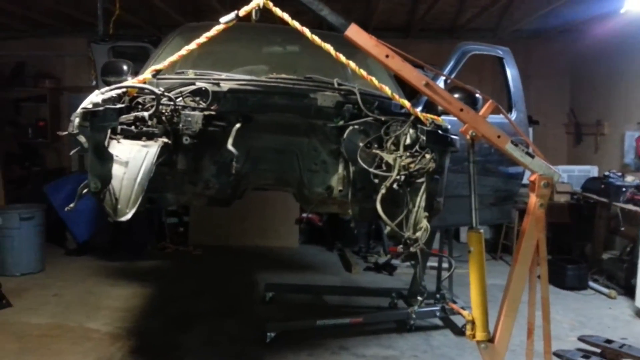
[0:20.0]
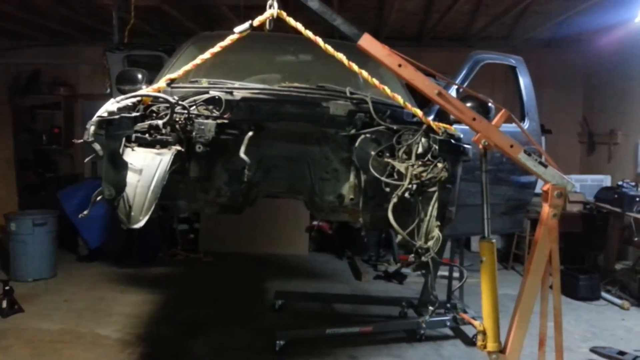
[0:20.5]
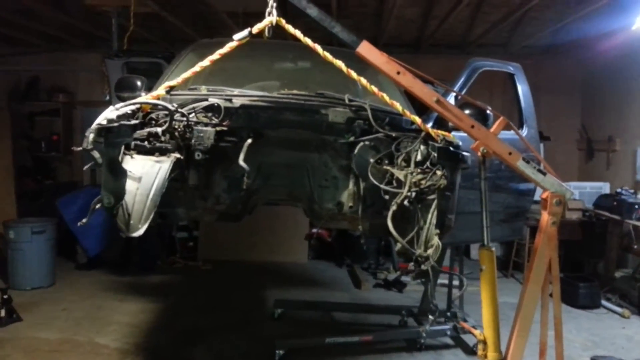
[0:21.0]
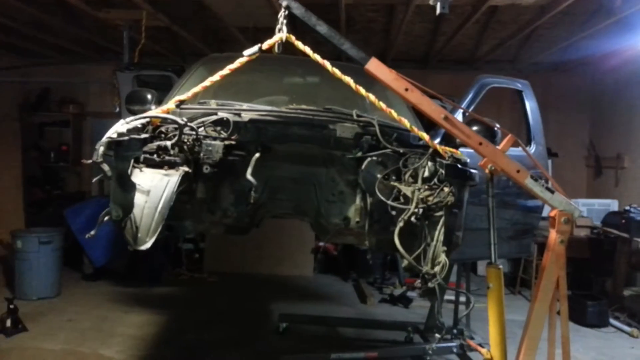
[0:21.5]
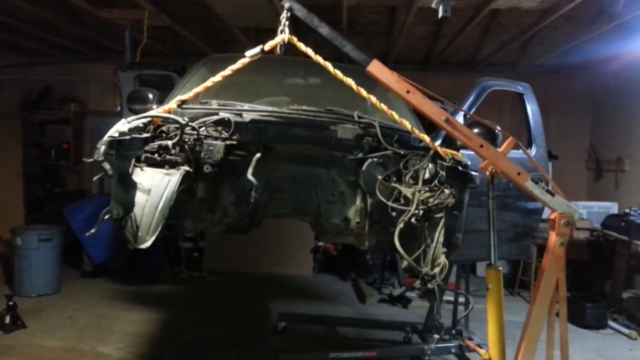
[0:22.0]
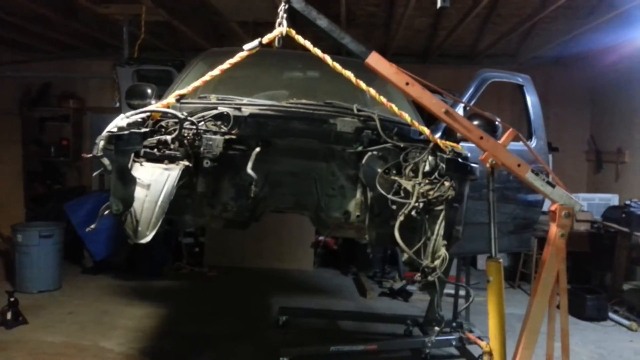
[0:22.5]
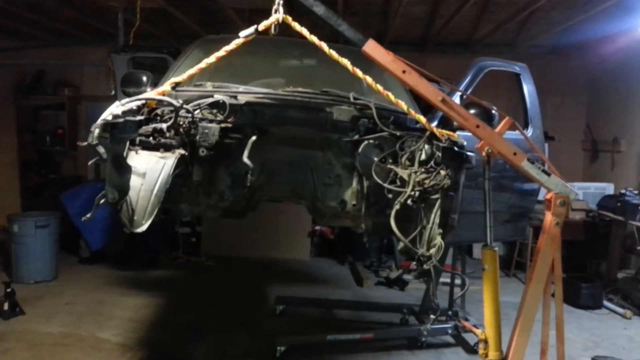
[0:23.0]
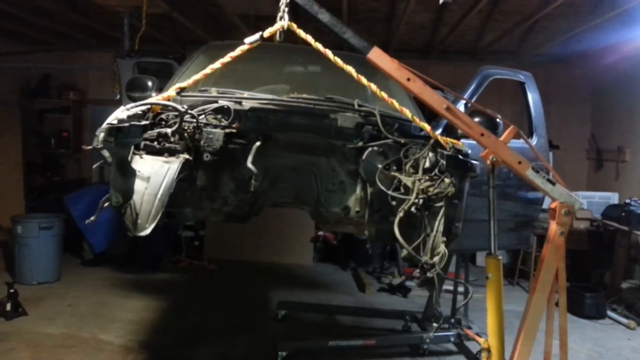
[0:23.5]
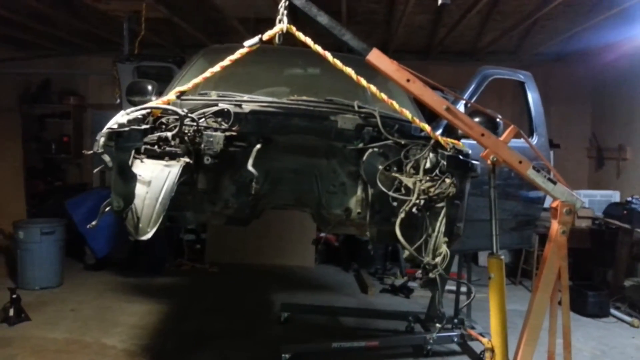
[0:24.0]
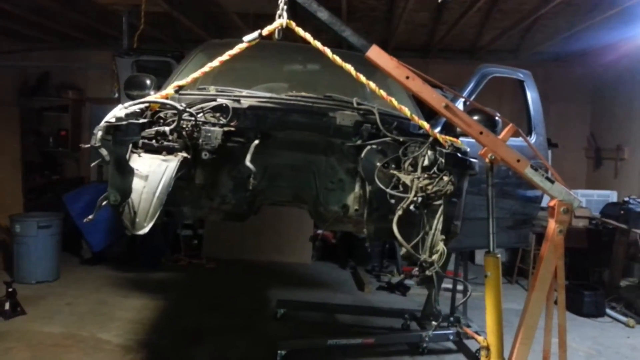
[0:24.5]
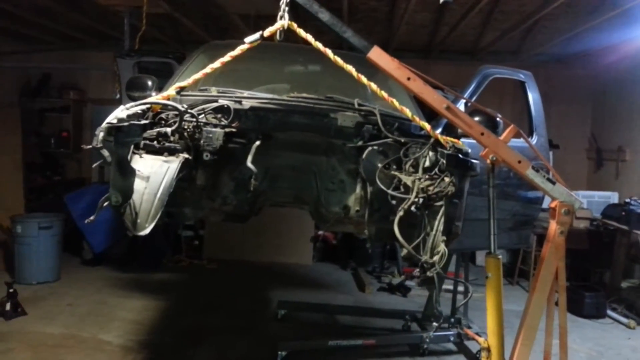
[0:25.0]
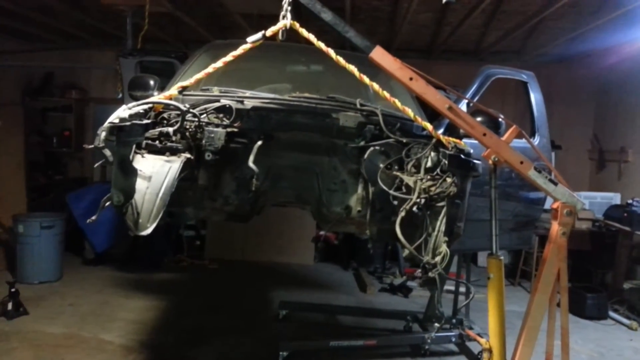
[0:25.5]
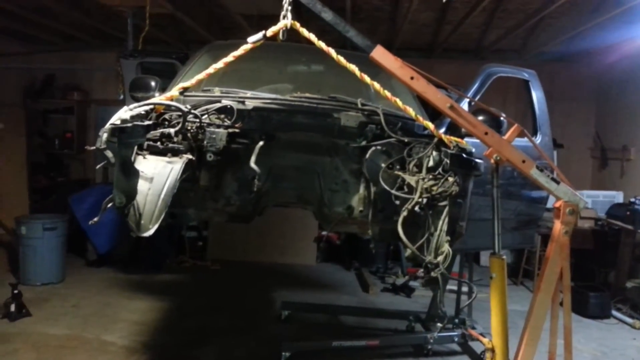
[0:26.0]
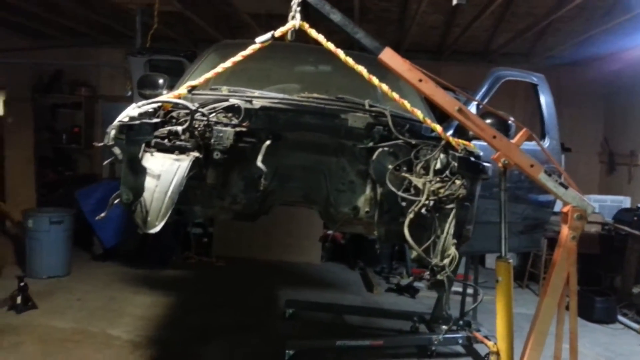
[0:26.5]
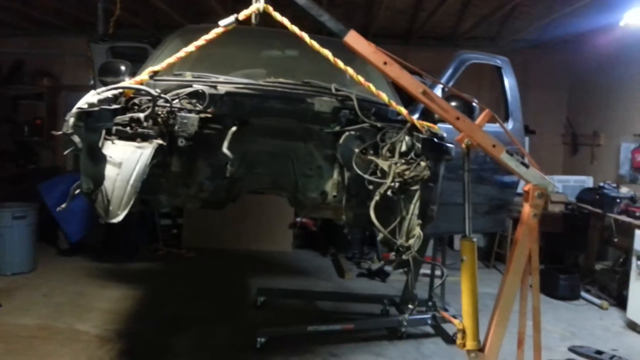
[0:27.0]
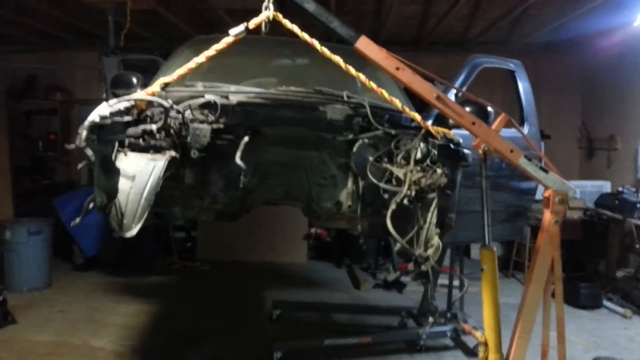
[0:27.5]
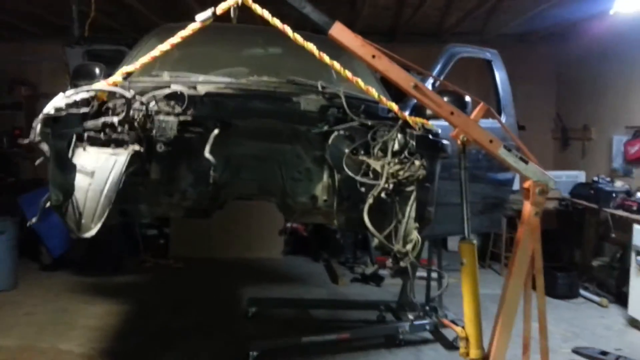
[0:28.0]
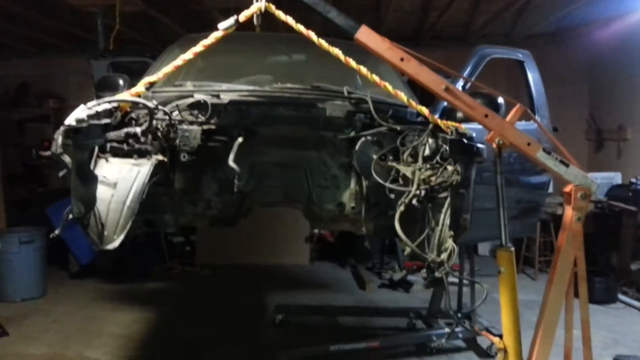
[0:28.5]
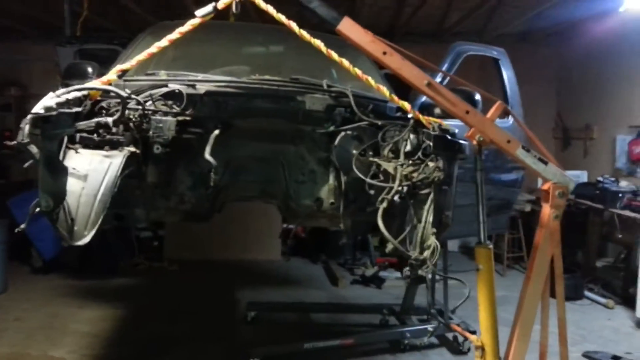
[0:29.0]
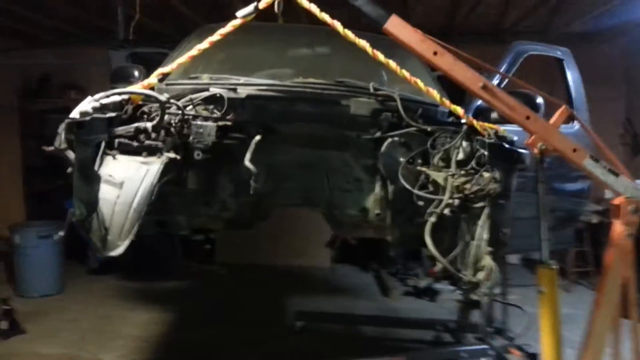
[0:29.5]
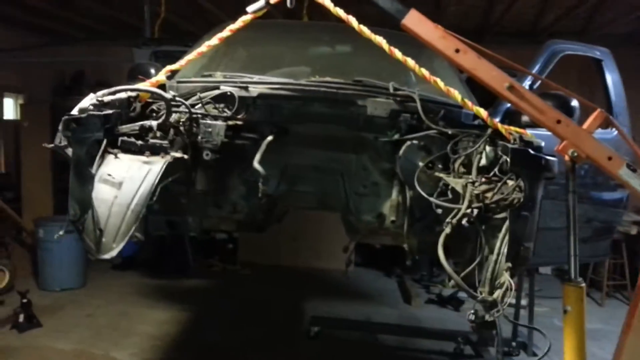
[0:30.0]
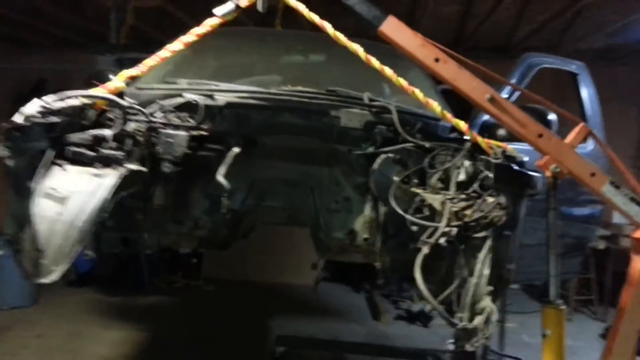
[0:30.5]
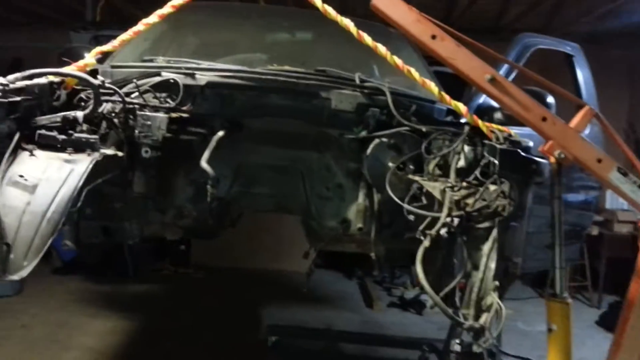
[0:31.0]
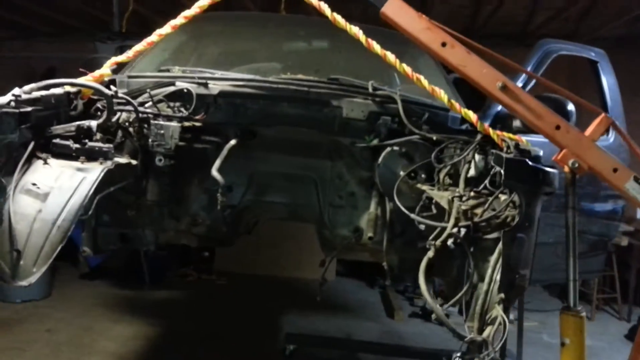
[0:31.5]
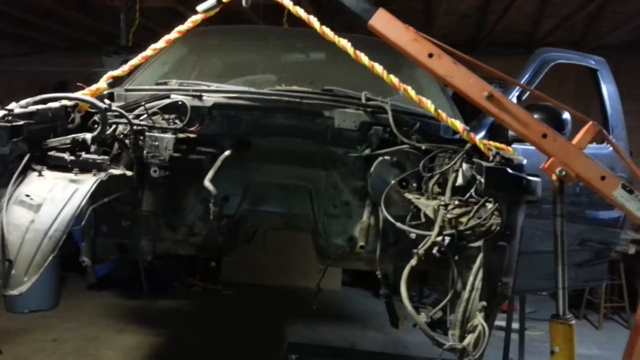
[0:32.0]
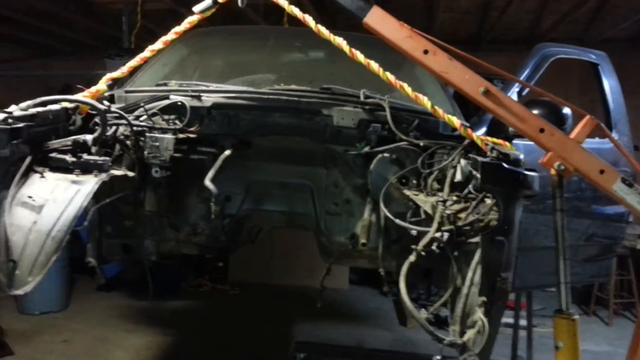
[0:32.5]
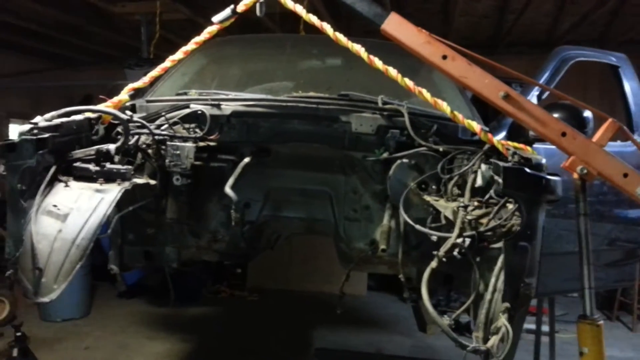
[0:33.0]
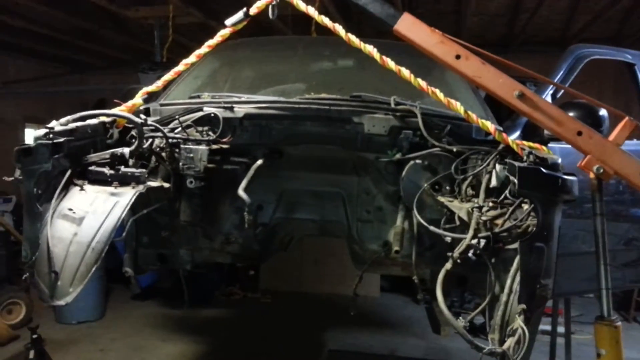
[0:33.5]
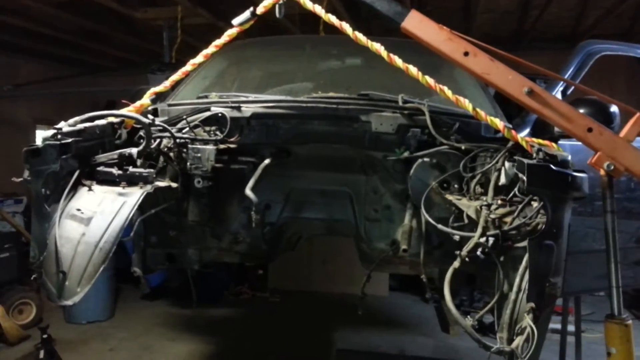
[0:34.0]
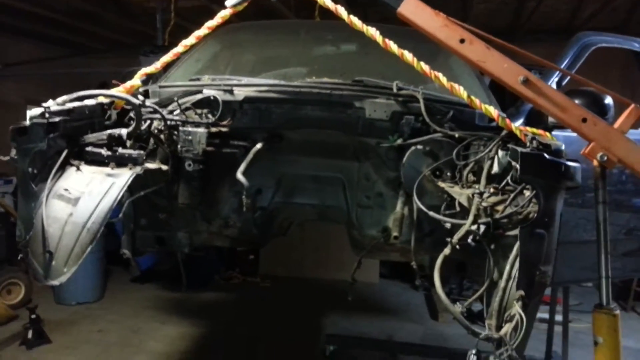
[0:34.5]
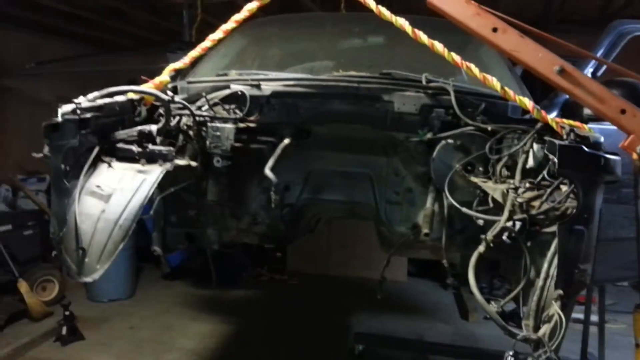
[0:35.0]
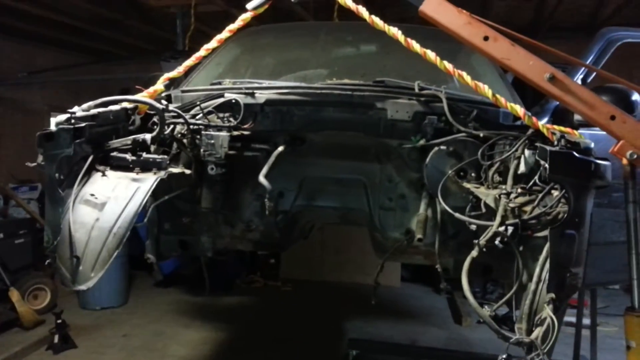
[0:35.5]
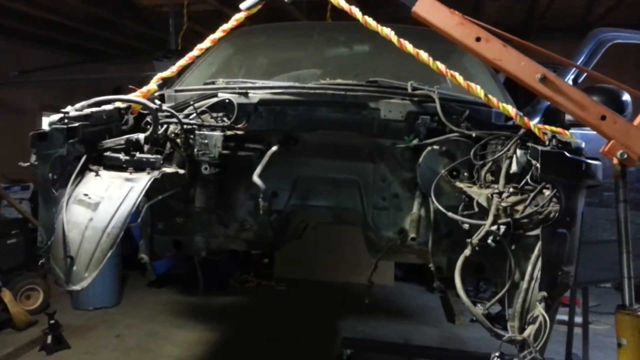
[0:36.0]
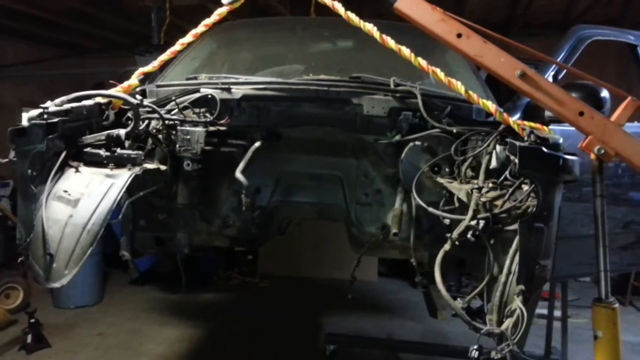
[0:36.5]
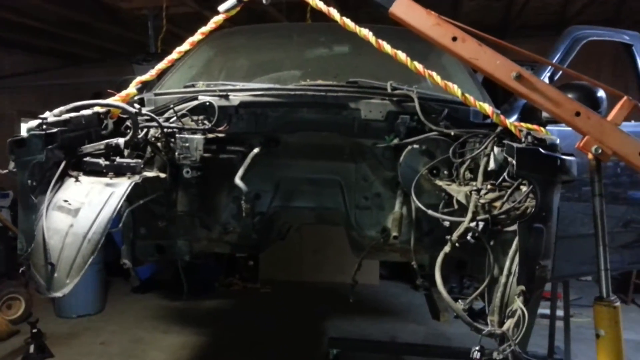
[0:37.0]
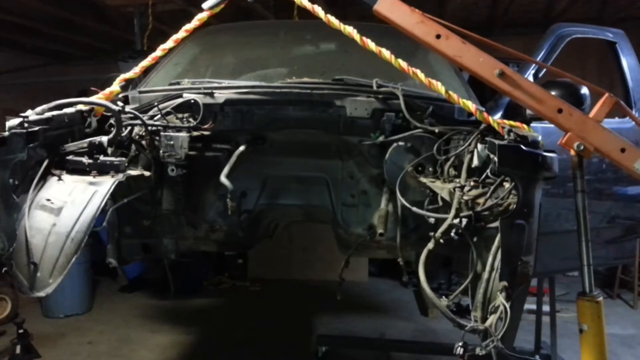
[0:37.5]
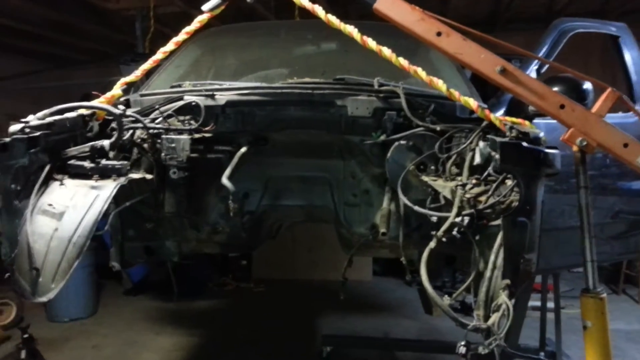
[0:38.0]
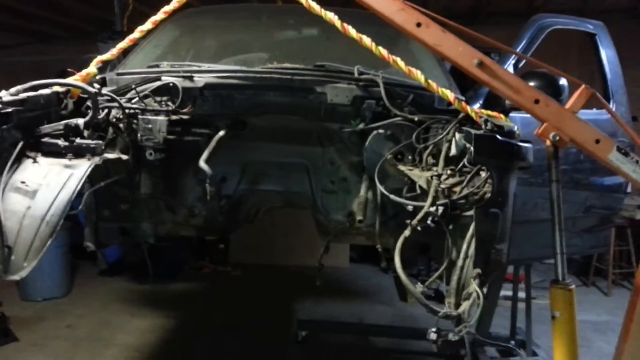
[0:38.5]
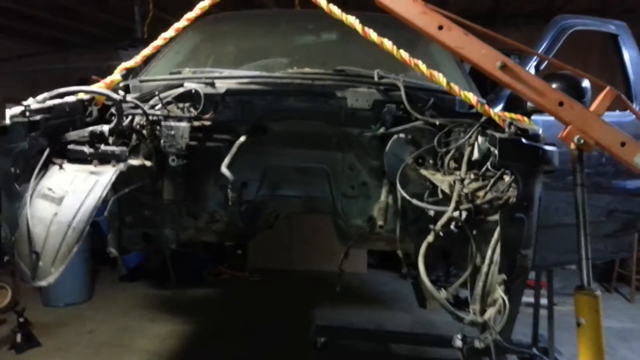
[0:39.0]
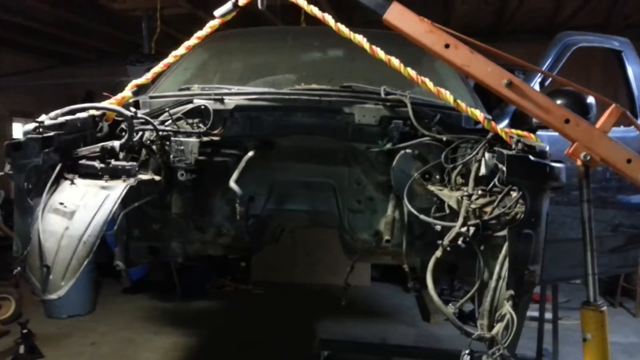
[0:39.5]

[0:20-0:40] The footage remains very shaky, and at one point the person filming walks closer to the car so that the rest of the room is no longer in frame. On the left side a flap-like piece hangs down. The vehicle looks black, although the open door on the right side has a blue sheen, possibly from the light on that side of the room or because the car's color is darker than it appears. On the right side, some kind of apparatus seems to be holding the car up from underneath as well. As the camera moves closer, more of the car's underside becomes visible; because the middle is so open, it is possible to see all the way underneath. The intact tubes or wires on either side are all black or a dark color. The car still has its windshield and windshield wipers.